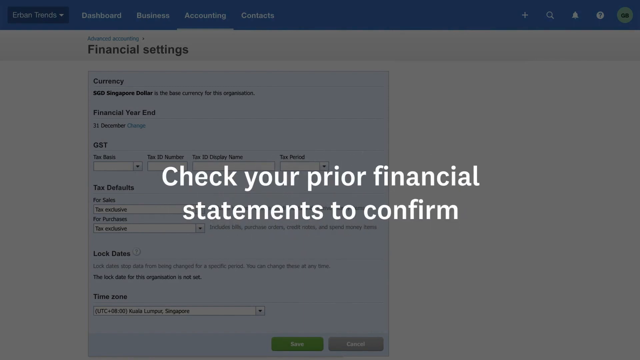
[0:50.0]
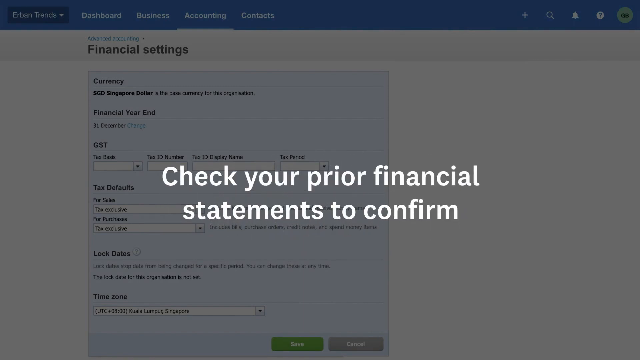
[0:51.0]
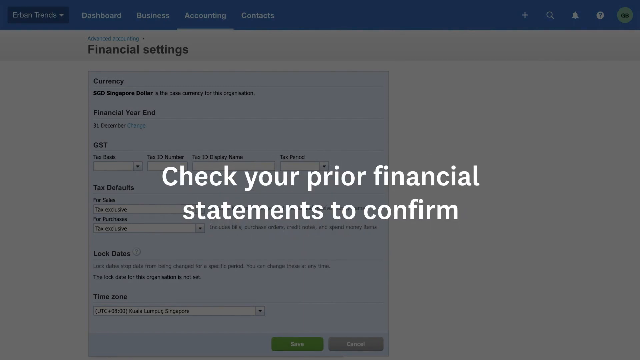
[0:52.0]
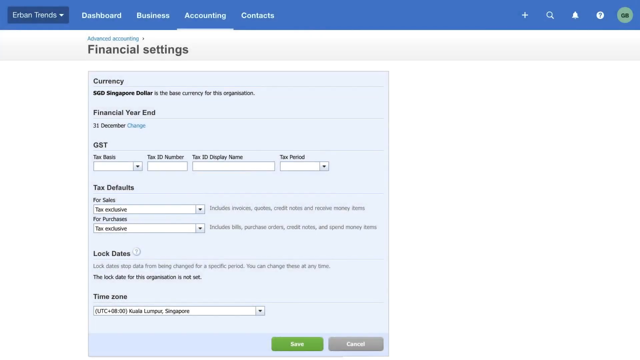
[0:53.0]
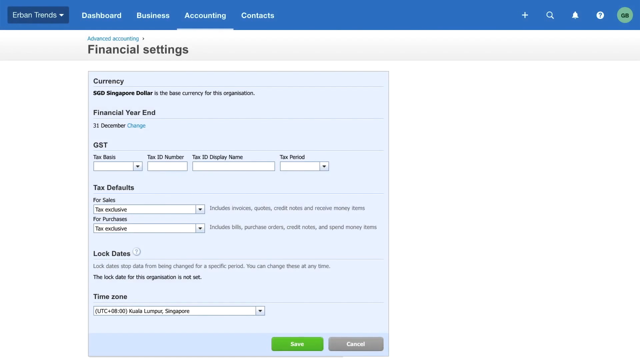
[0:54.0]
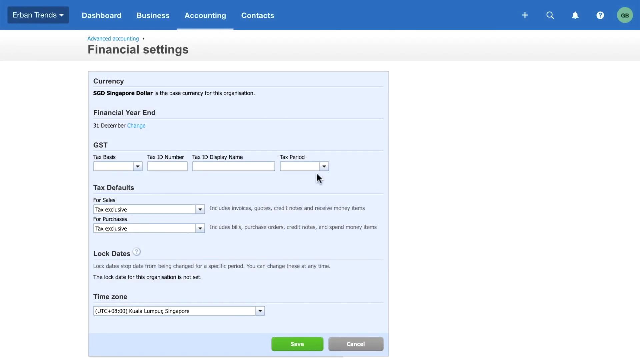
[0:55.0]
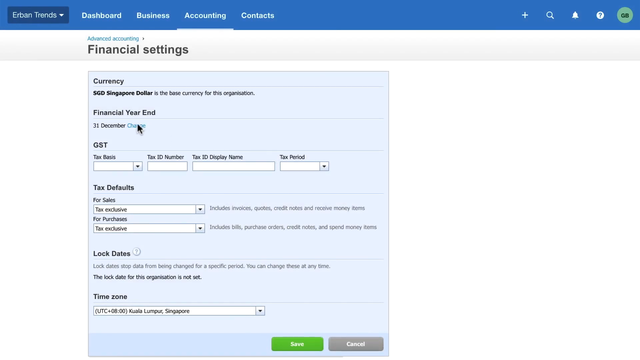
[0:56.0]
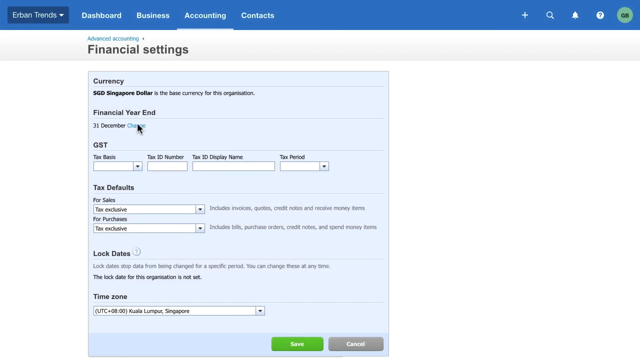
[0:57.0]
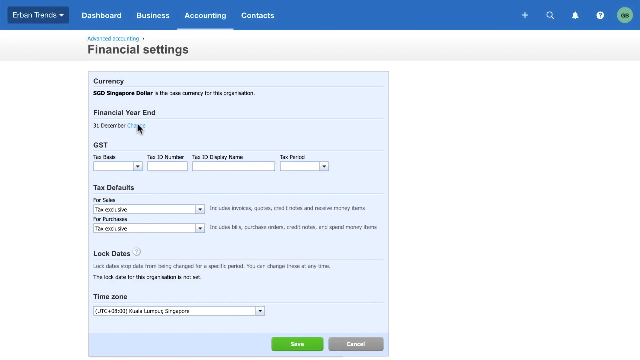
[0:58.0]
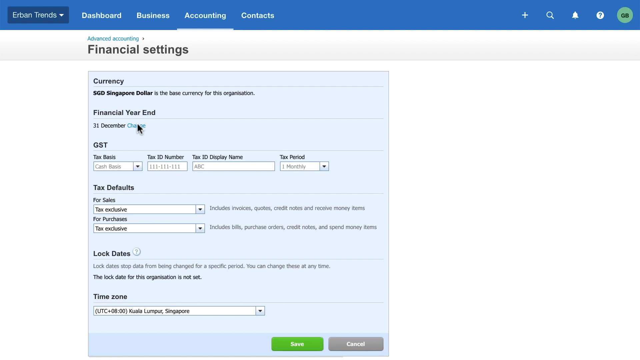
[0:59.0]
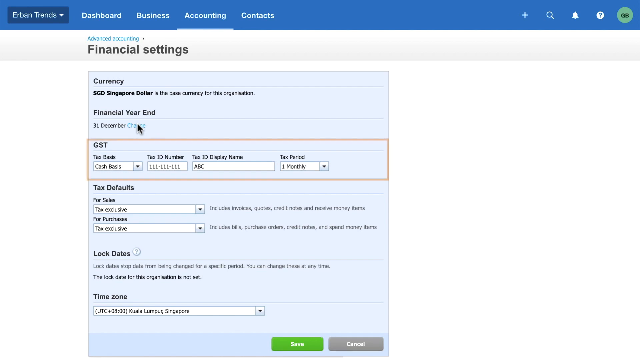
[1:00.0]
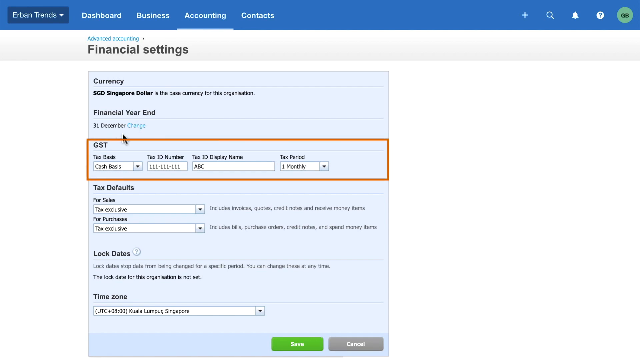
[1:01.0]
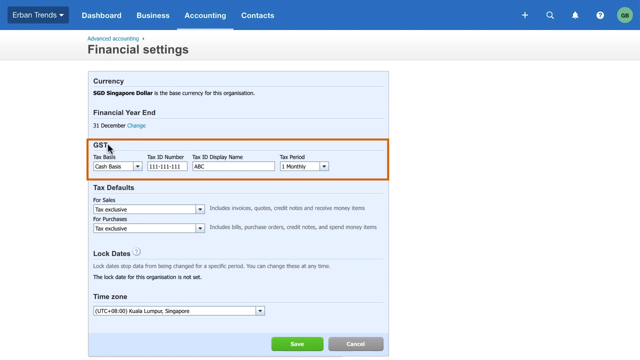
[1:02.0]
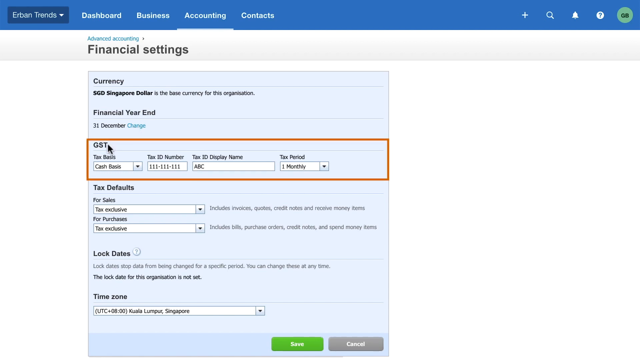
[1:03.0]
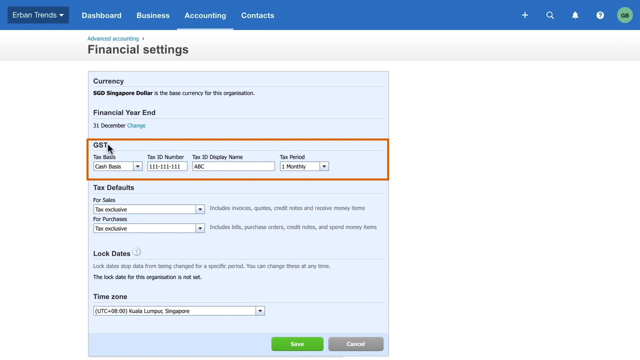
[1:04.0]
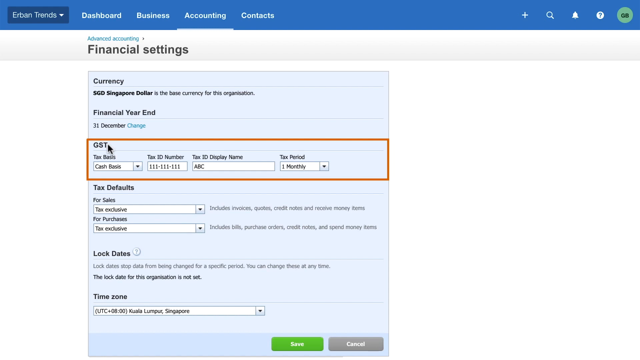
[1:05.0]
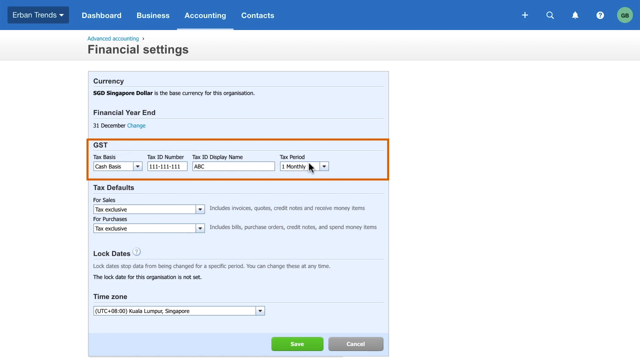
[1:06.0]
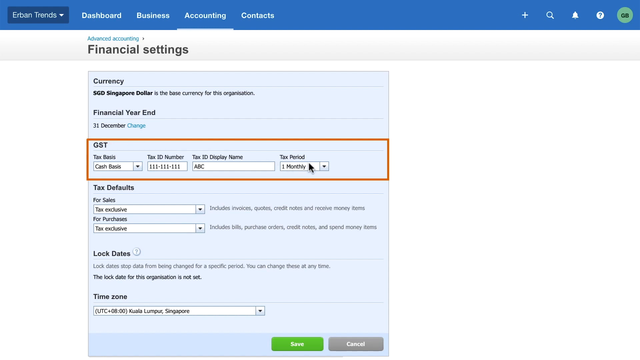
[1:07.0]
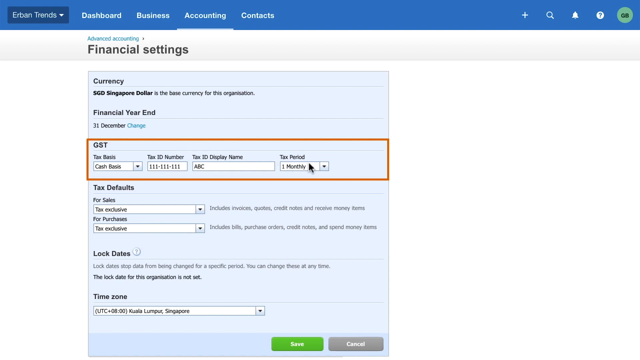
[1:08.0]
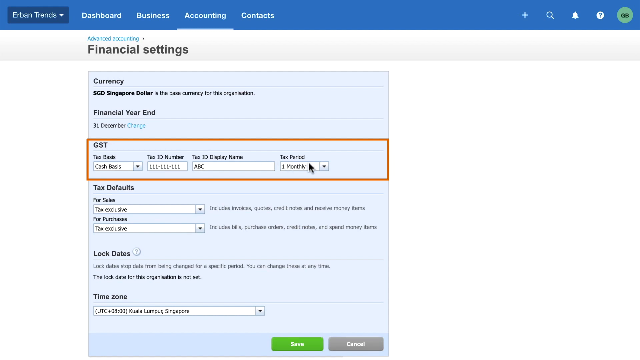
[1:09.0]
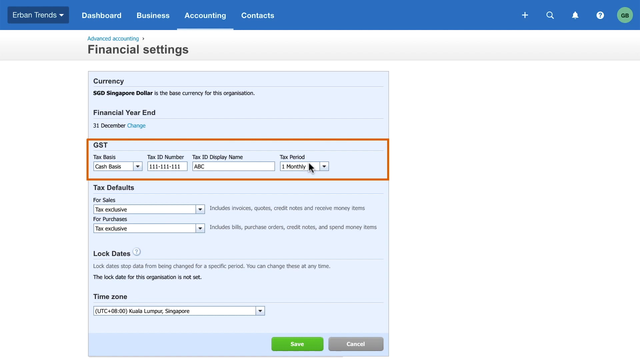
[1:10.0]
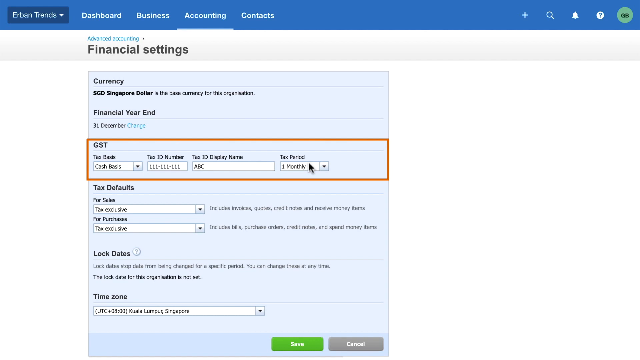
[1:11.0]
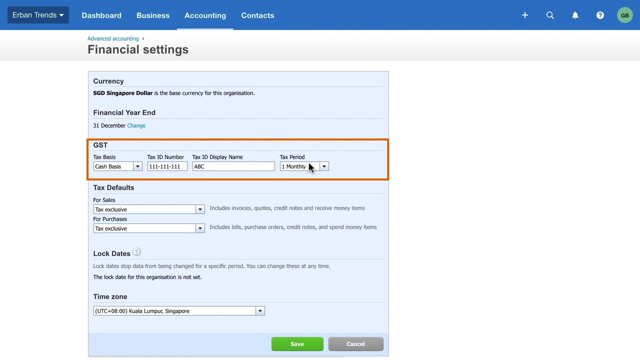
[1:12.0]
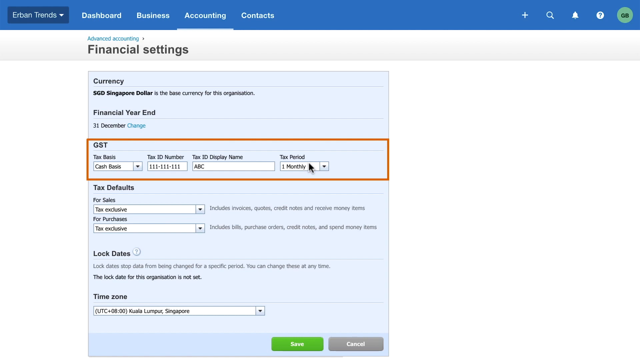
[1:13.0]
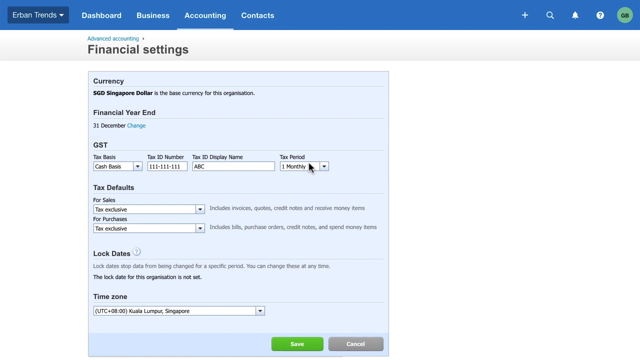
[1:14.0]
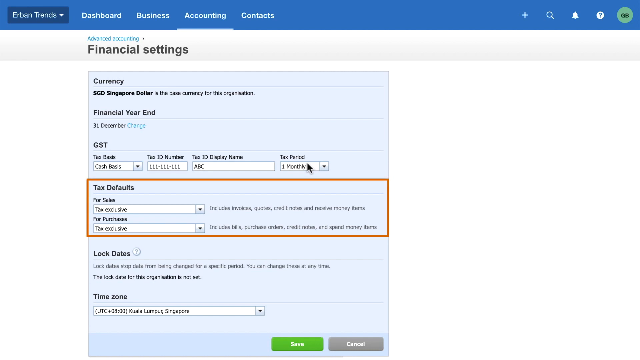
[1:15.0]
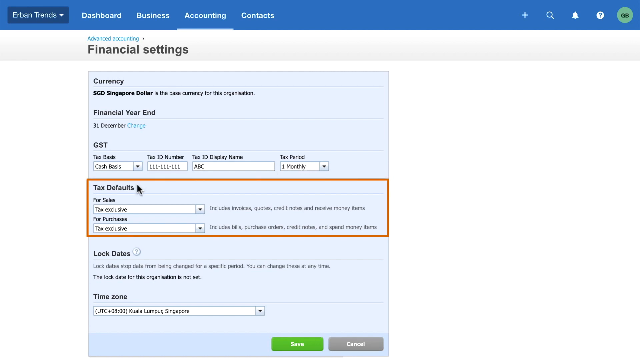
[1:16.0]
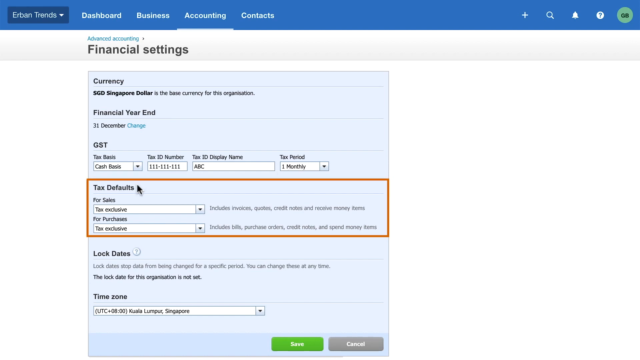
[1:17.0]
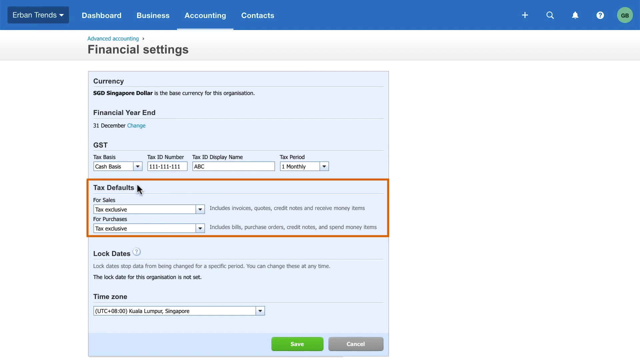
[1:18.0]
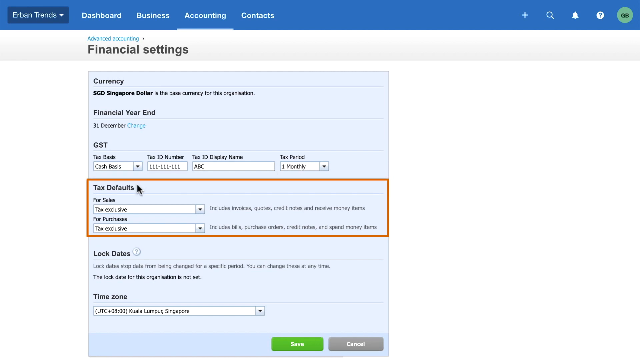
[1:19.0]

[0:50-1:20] The overlay text reads "check your financial statements to confirm." The cursor hovers over a blue "change" button on the fiscal year end. The same orange border then highlights the tax section, with GST, the tax basis, the tax ID number, and a tax period currently set to one monthly. Next, the following box is highlighted in orange: tax defaults, with tax exclusive for sales and tax exclusive for purchases. Text explains that the sales default includes invoices, quotes, credit items and receive money items, and that the purchases default includes bills, purchase orders, credit notes and spend money items. The video moves through the sections of the financial settings page, highlighting each segment in turn.